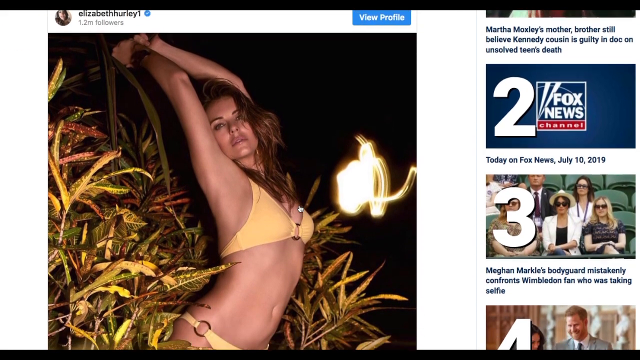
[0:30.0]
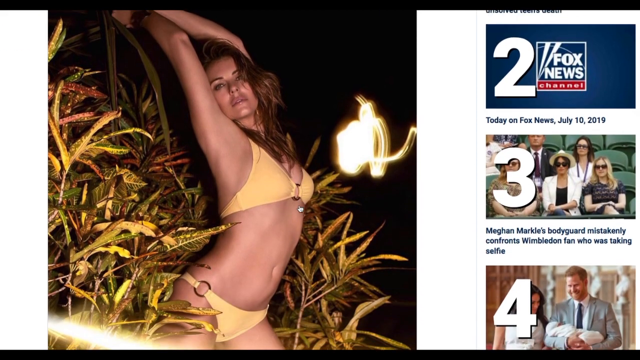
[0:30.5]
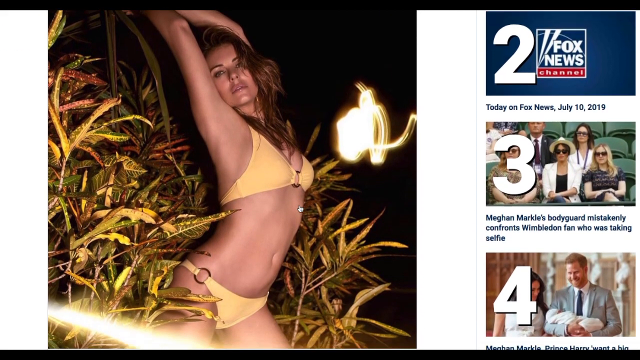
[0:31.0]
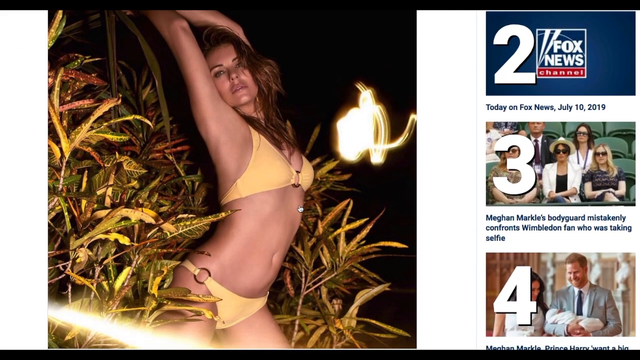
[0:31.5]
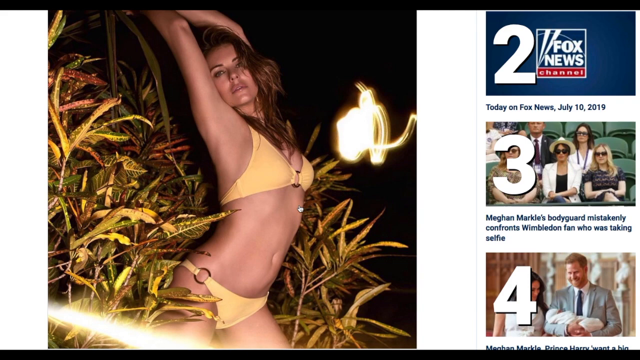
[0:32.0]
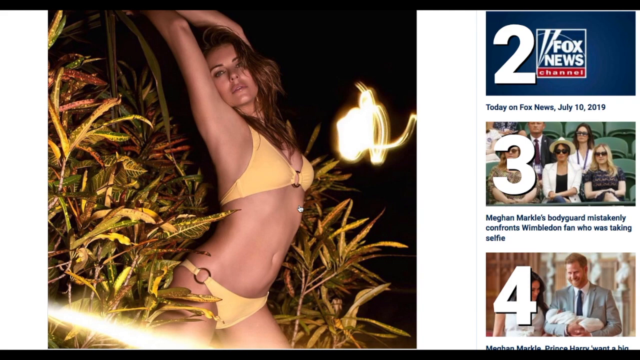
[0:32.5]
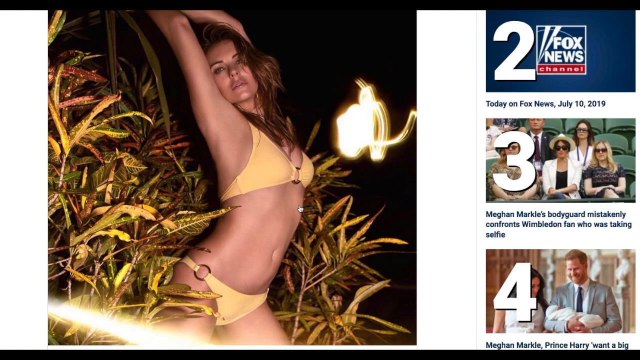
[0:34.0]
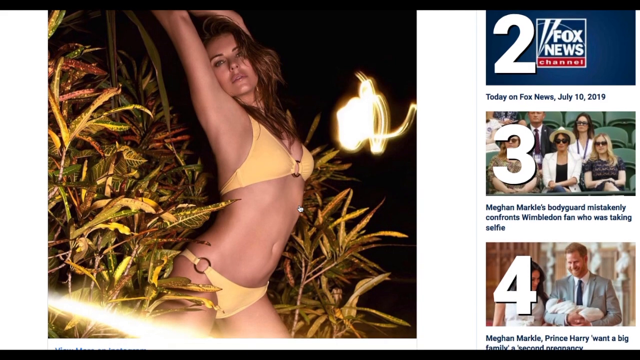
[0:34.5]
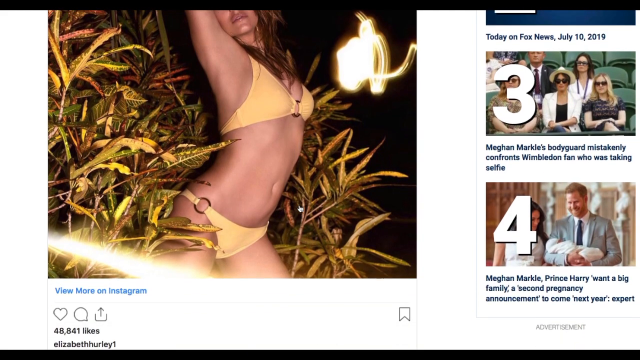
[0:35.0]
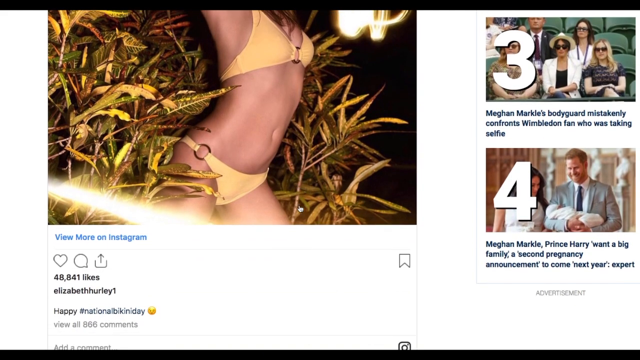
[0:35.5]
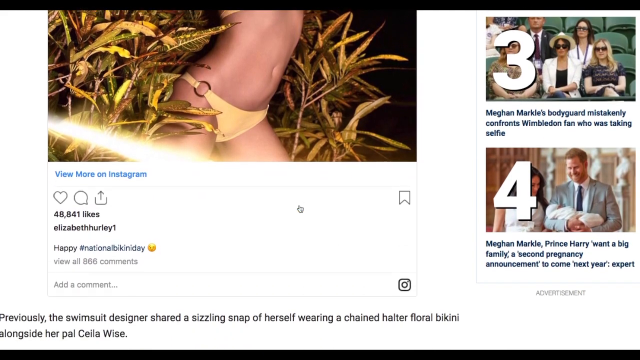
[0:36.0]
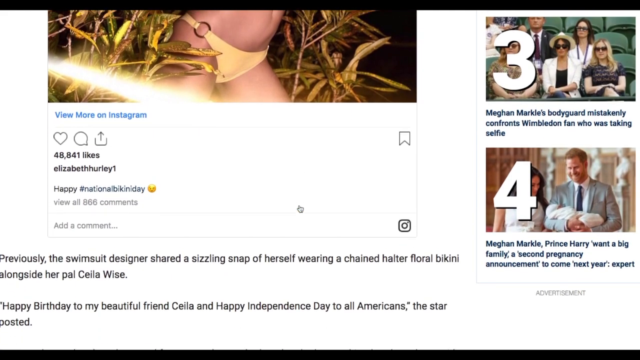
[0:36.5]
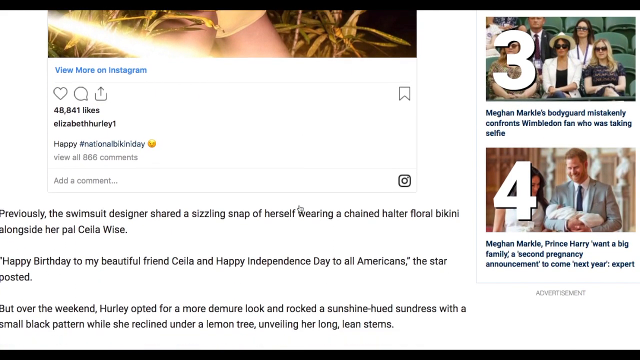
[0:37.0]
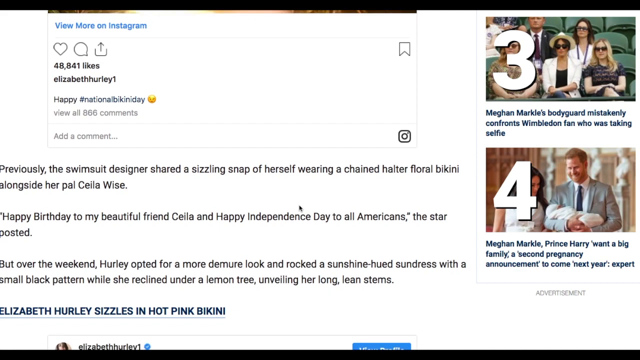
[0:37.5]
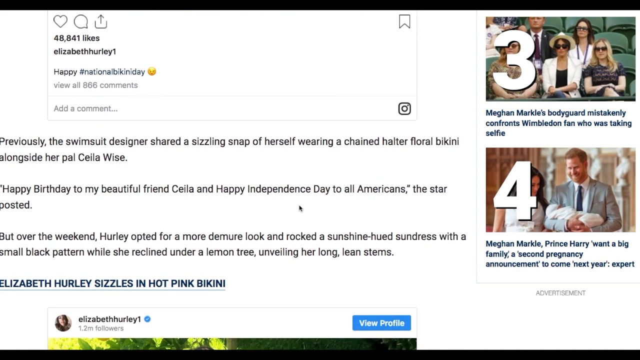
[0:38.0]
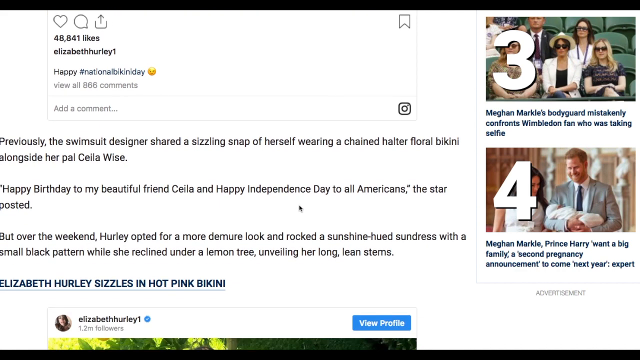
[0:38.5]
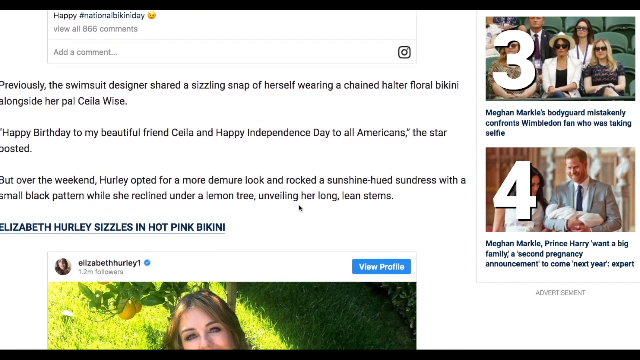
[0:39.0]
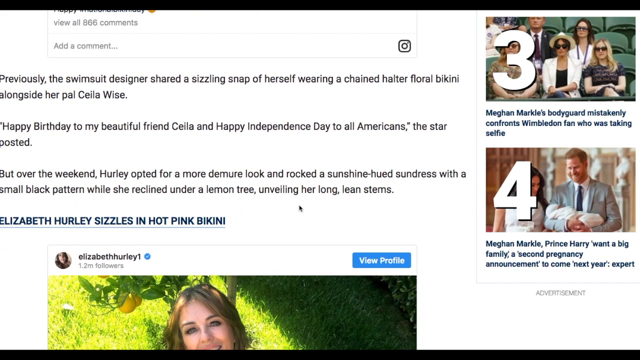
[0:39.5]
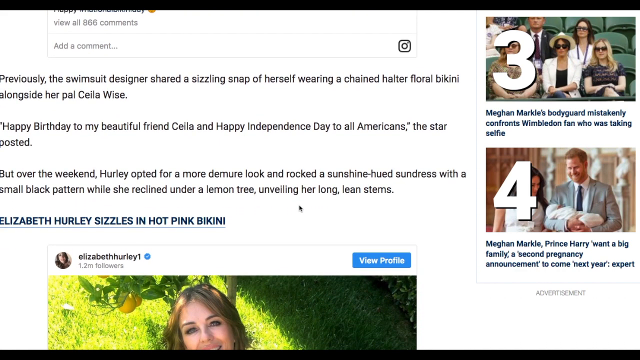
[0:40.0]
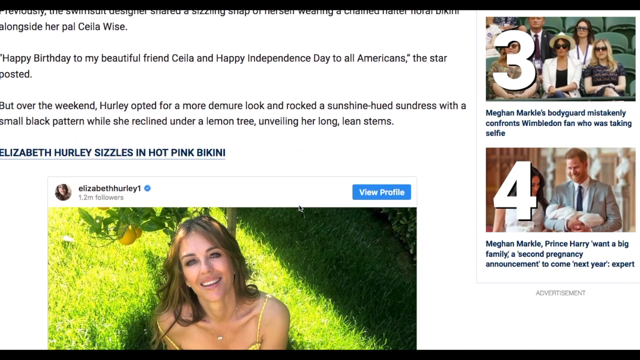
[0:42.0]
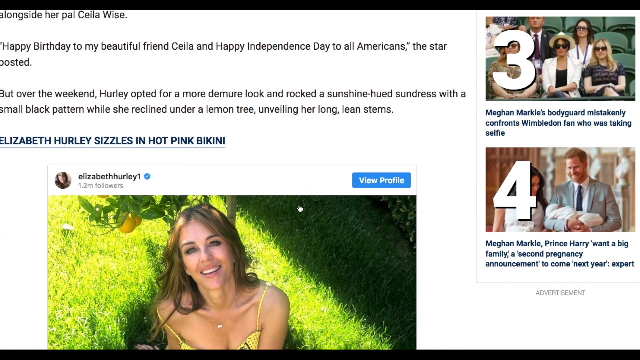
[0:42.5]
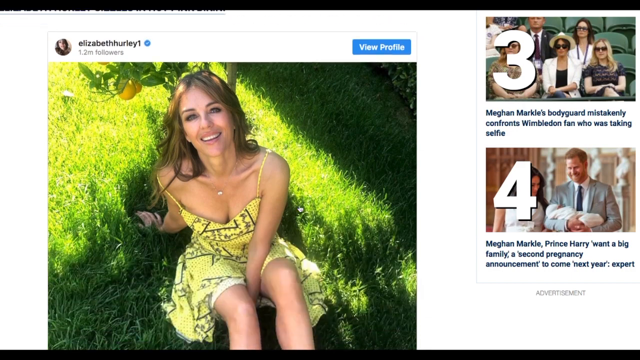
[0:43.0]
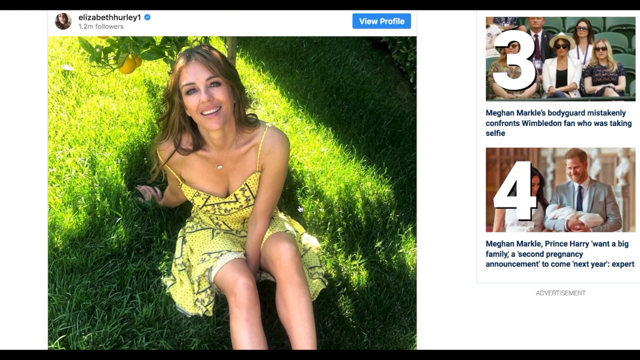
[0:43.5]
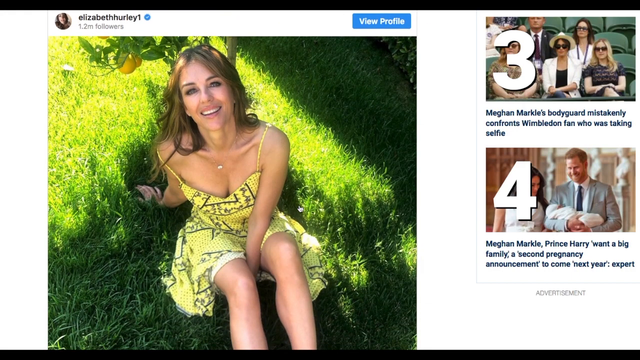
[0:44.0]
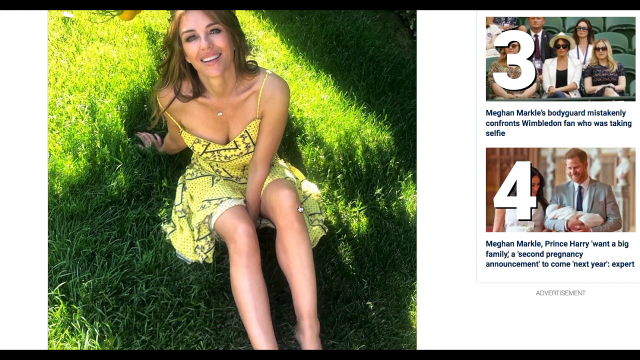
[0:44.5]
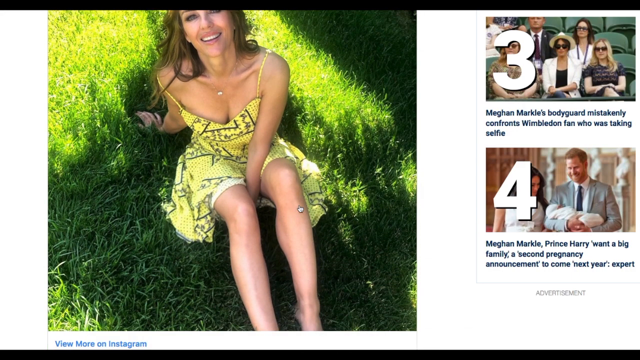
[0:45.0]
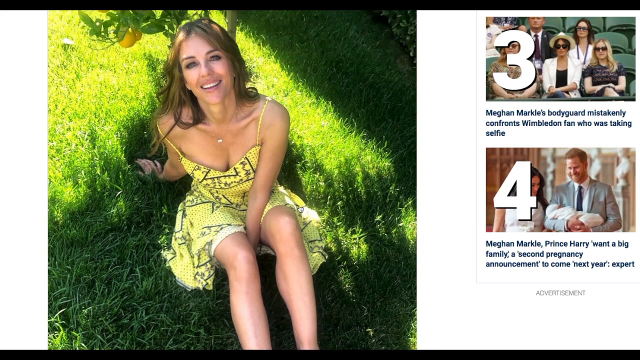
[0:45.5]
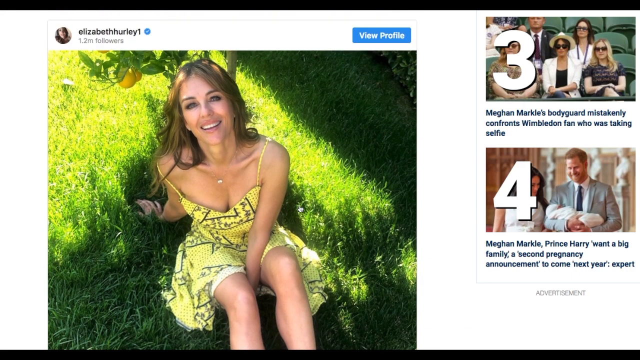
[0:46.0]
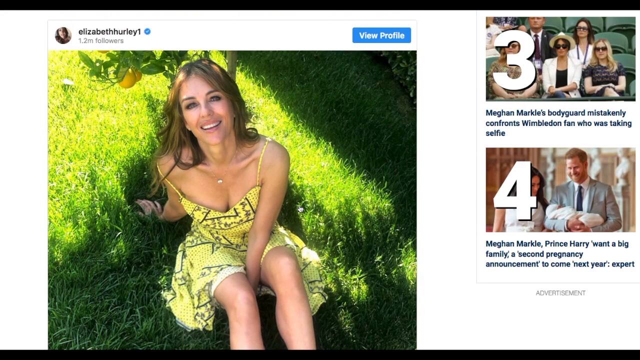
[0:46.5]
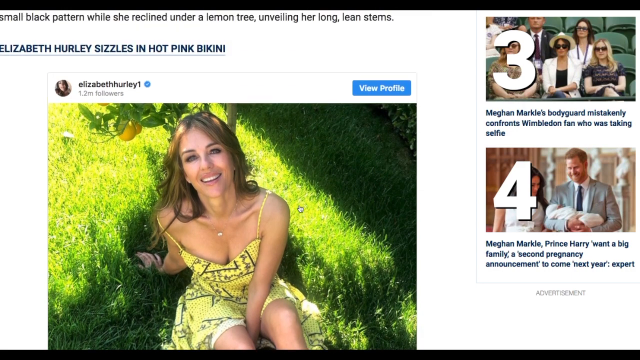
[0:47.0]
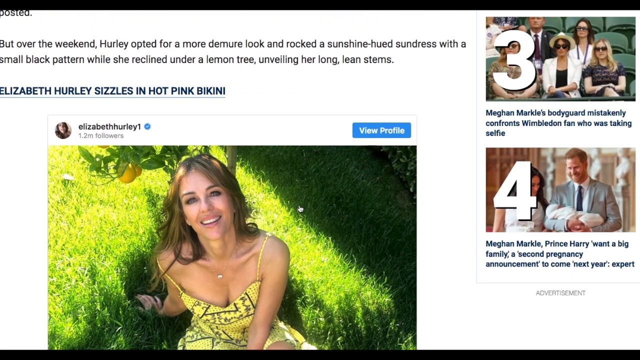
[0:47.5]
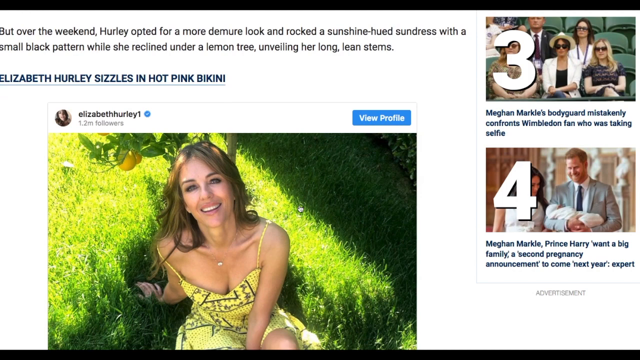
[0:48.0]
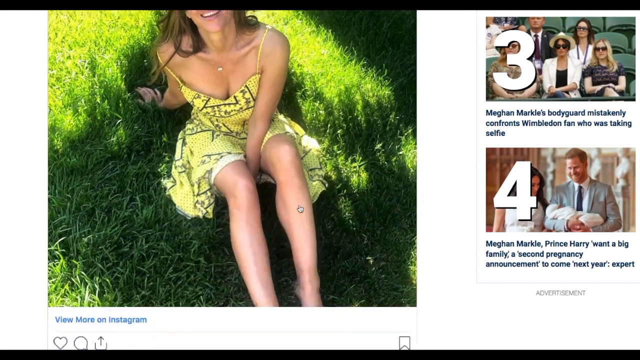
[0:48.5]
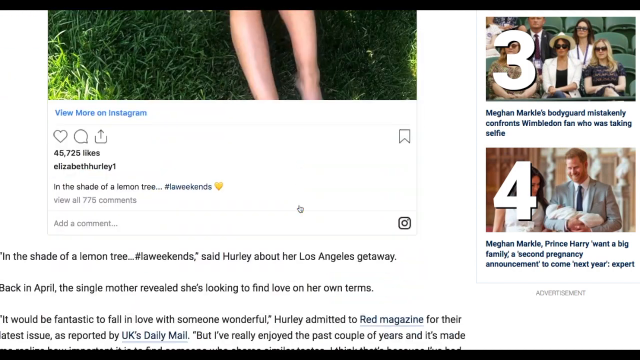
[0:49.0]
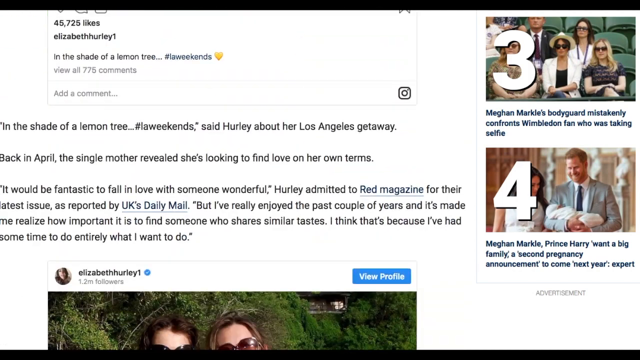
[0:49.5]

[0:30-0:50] The site shows a picture of Elizabeth Hurley posing in a pink bikini against a background of what looks like a bush with many green and yellow leaves. On the right side are more images marked with white numbers two, three, and four: number two has the Fox News logo, number three shows people sitting on what looks like bleachers or green seats, and number four shows Prince Harry and Meghan Markle. The user scrolls down to an article in black text beneath Elizabeth Hurley's picture. Continuing to scroll reveals another picture of Elizabeth Hurley in a yellow dress with black designs and black polka dots, sitting on a patch of green grass, with a branch bearing yellow lemons hanging at the top of the picture. Further scrolling shows more of the article in black text.